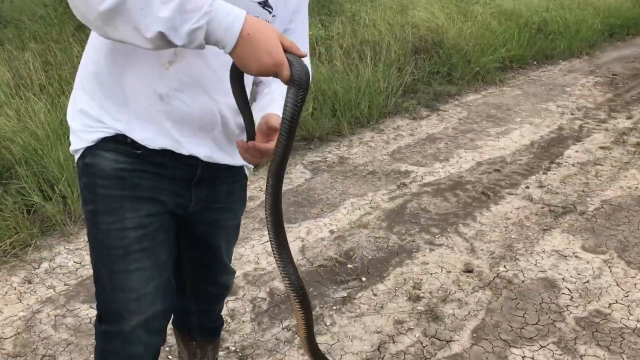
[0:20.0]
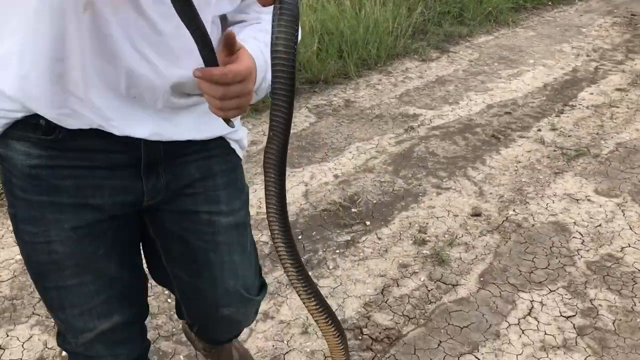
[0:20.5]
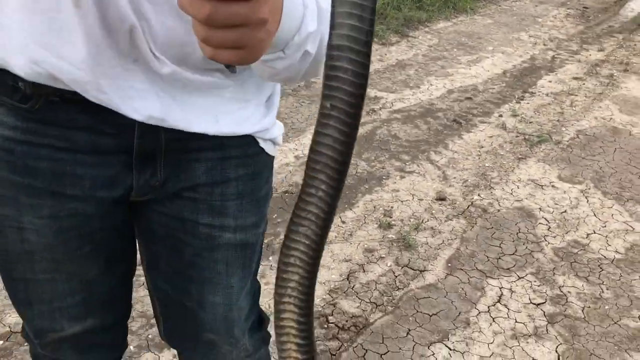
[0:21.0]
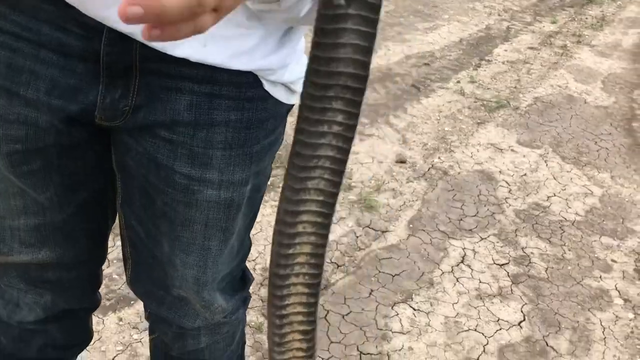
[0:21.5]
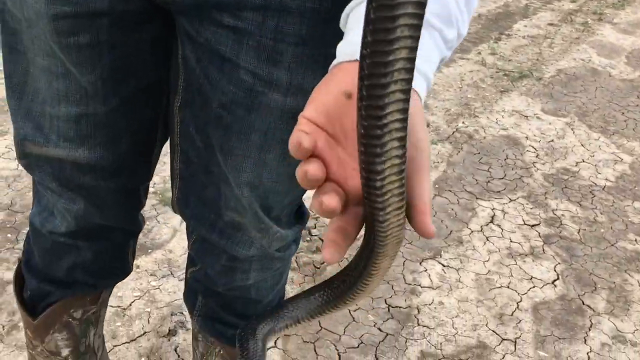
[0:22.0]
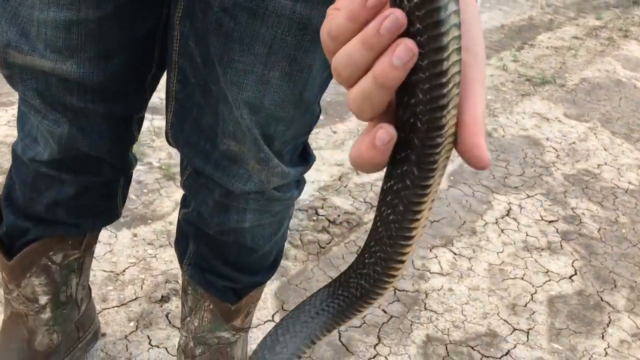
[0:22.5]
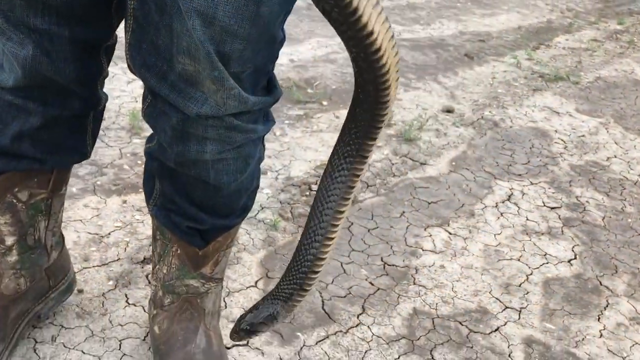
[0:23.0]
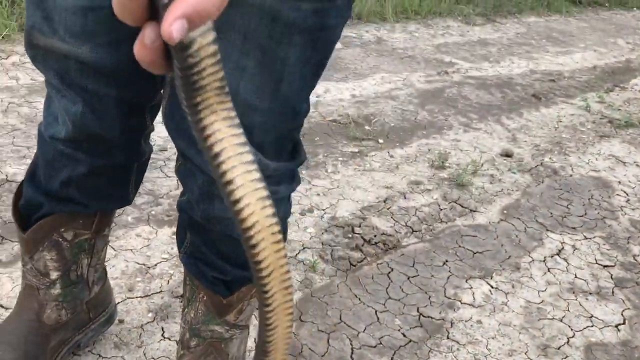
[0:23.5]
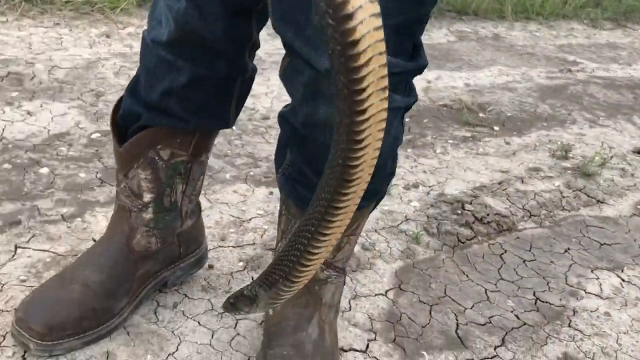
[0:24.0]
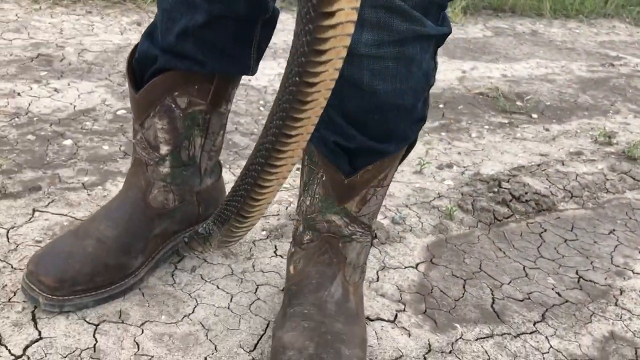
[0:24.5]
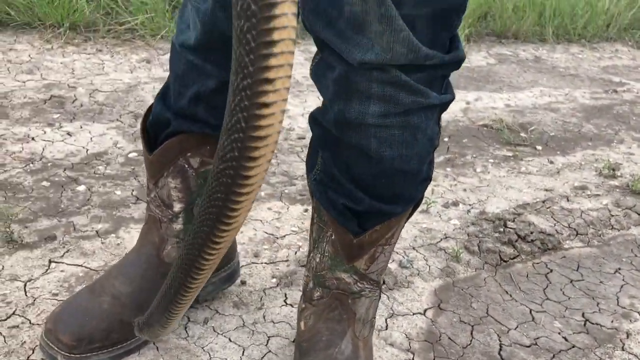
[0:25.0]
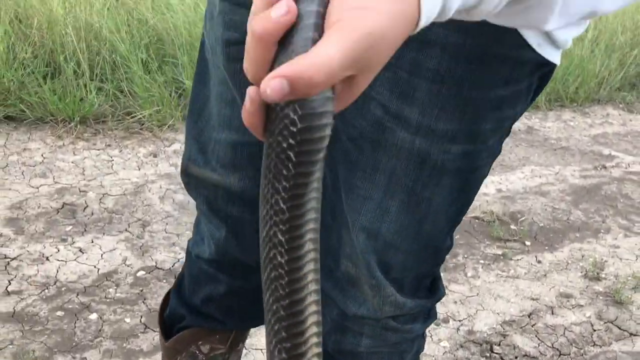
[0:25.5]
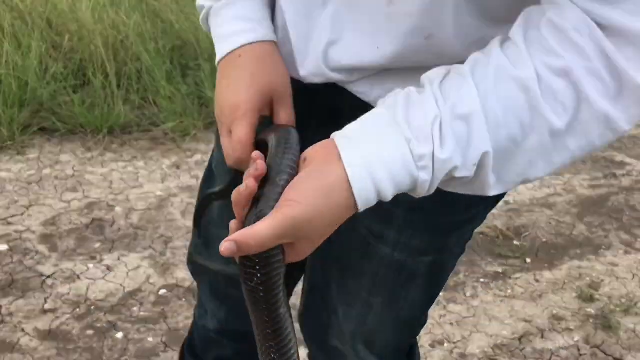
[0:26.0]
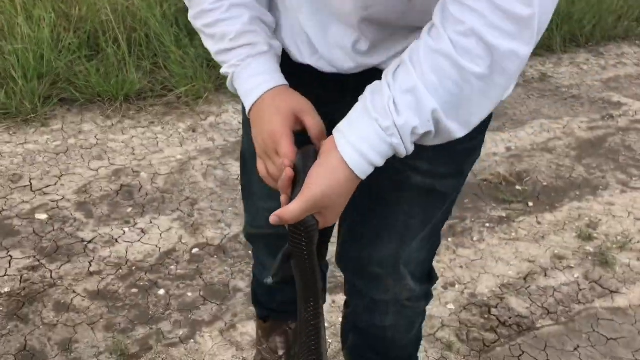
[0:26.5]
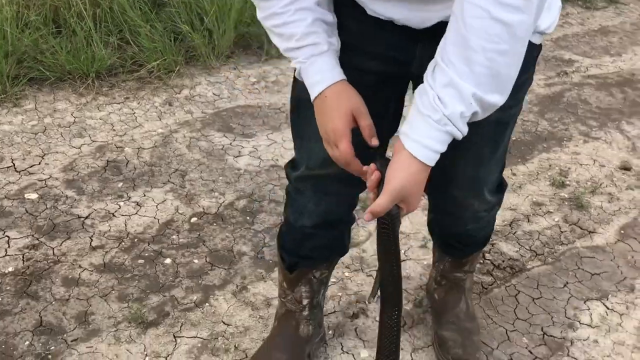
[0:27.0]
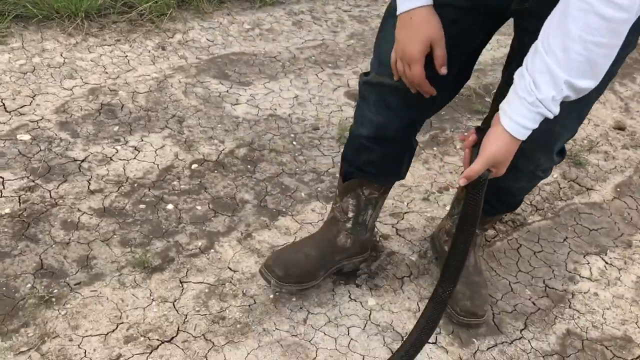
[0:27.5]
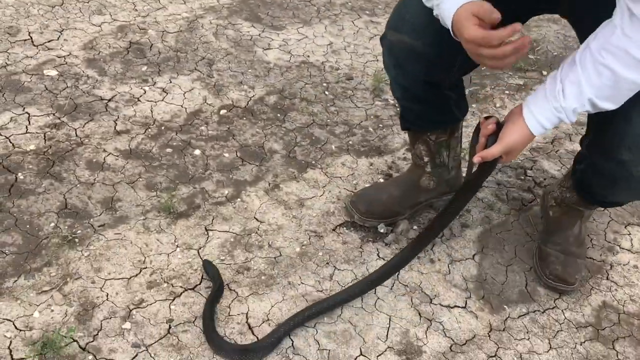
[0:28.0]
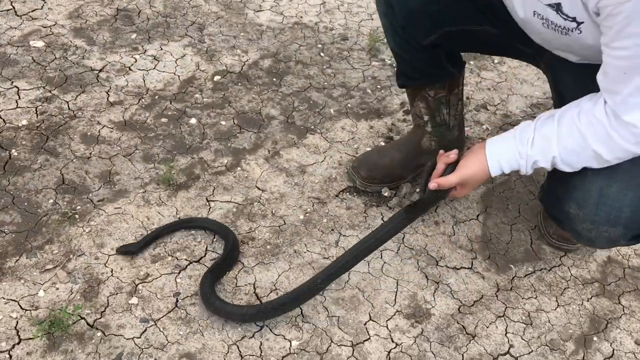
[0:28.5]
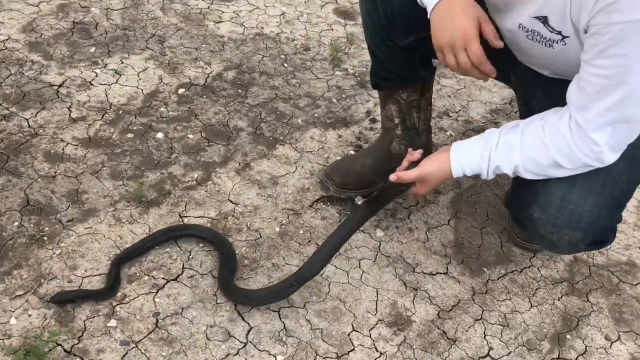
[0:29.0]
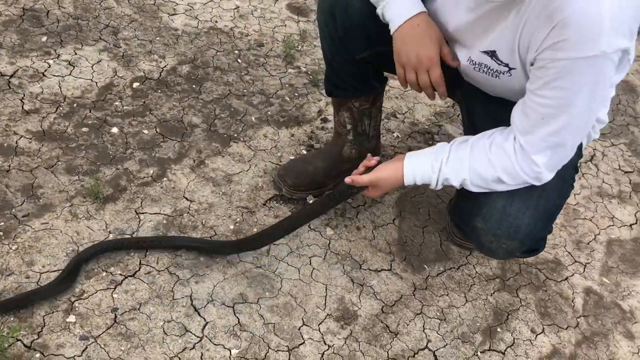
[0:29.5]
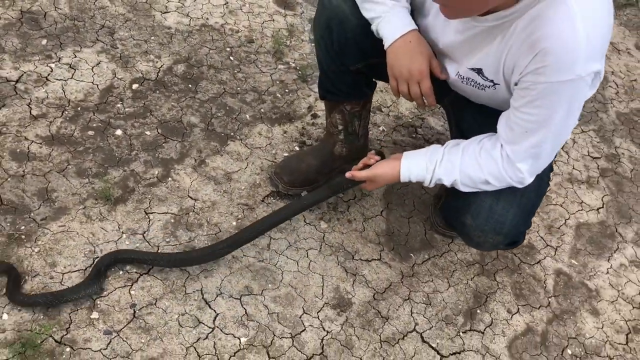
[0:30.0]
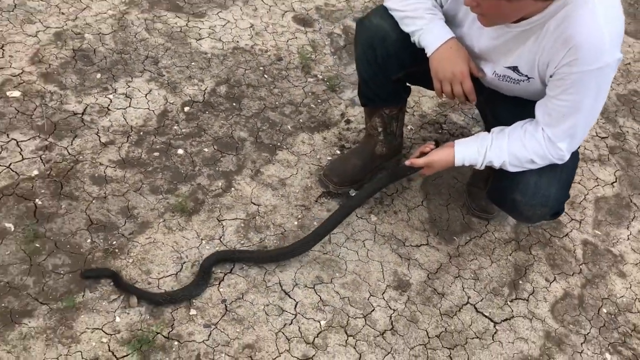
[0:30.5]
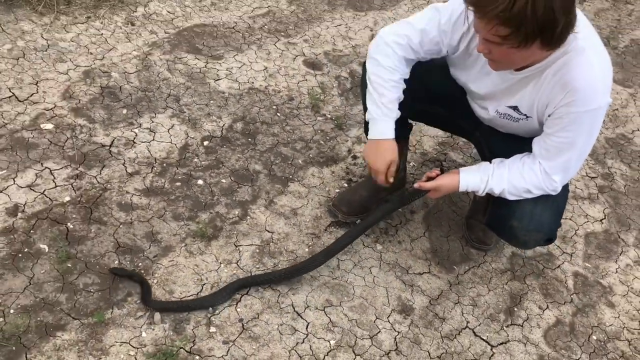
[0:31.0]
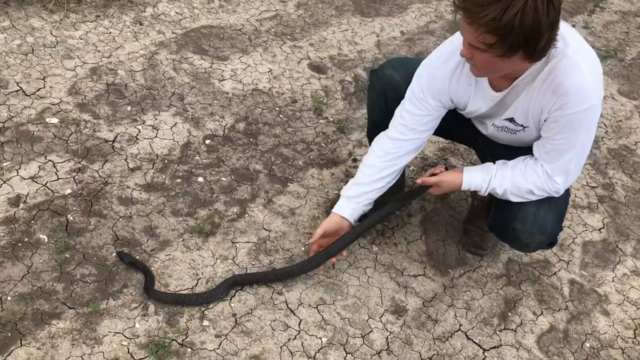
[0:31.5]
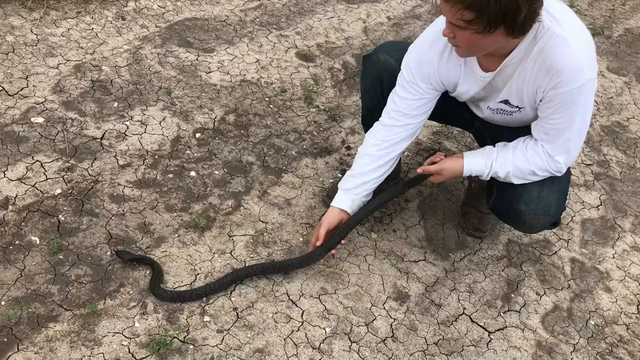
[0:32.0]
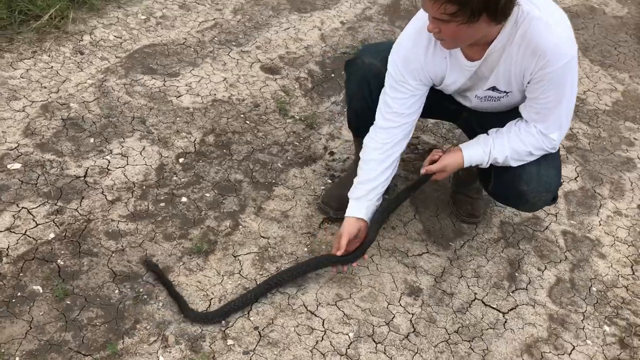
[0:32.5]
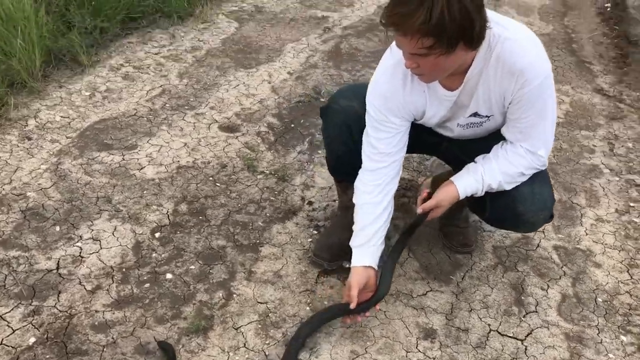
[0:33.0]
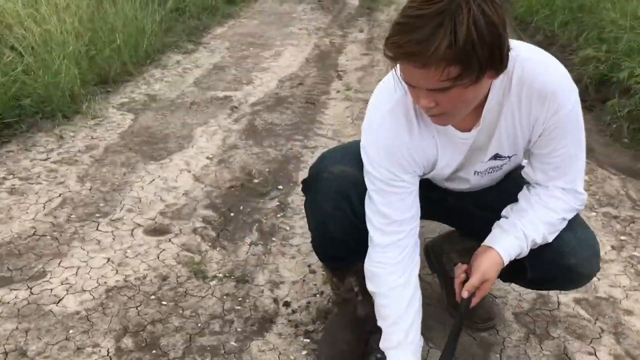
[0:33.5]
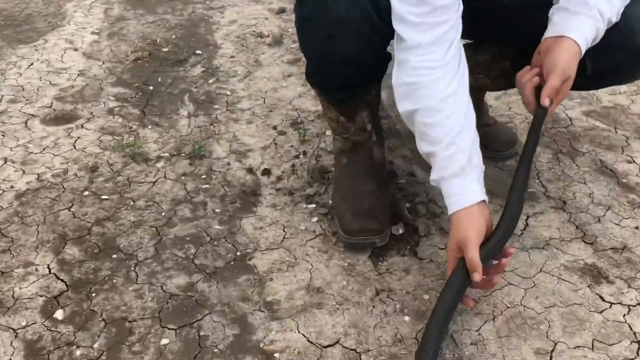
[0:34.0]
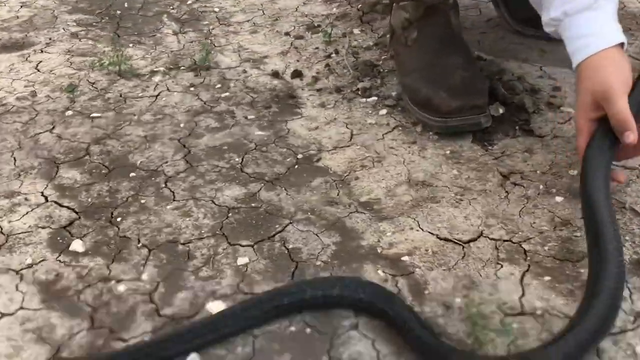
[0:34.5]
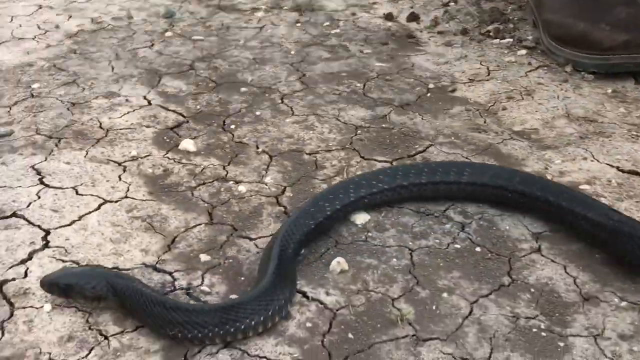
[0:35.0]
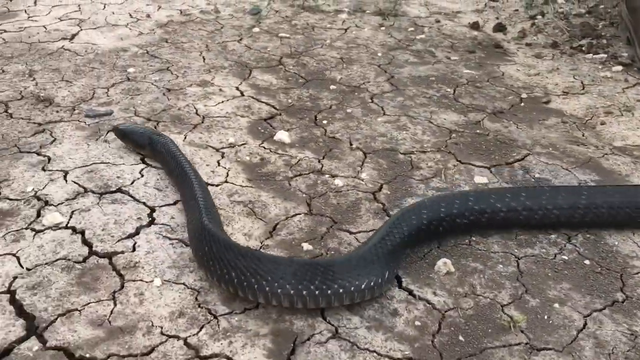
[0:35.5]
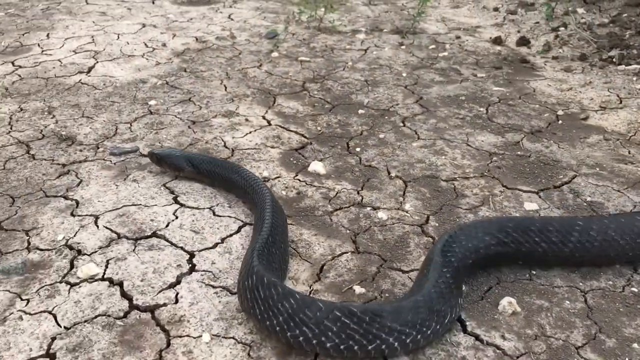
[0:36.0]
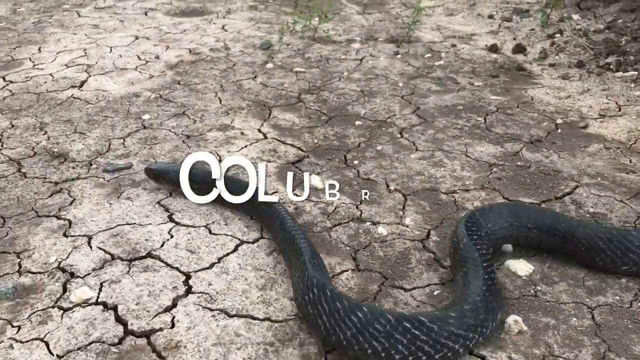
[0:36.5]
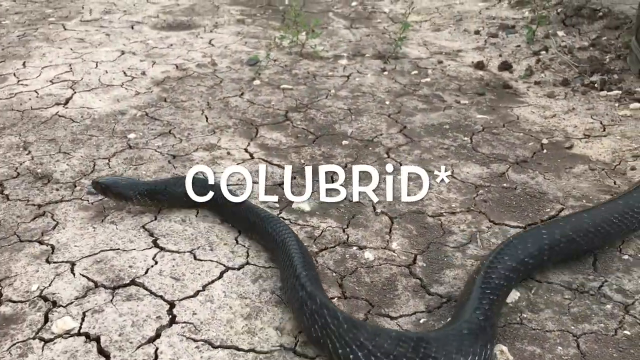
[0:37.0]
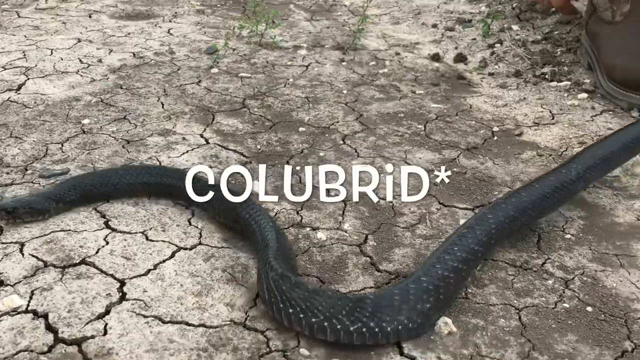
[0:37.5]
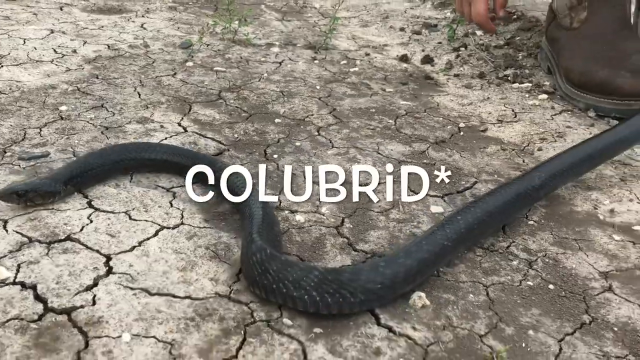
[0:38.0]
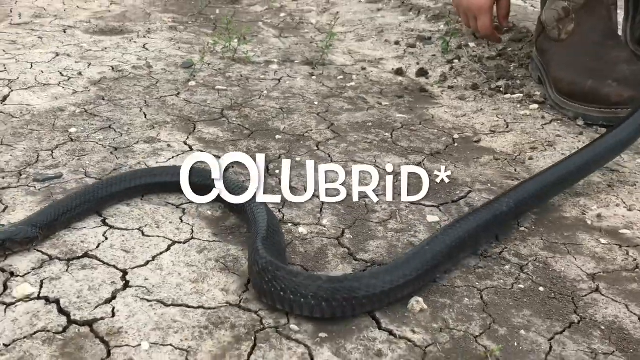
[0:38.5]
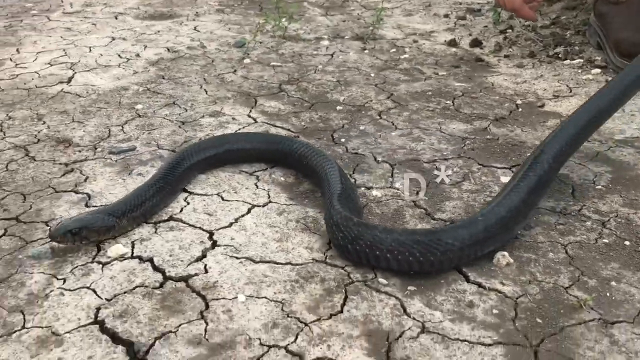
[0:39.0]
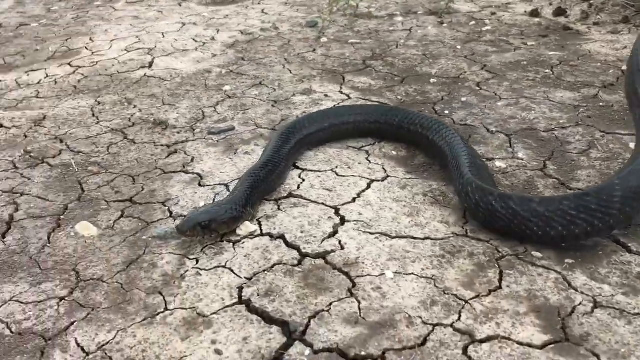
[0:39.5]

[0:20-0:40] The kid on the dirt road wears blue jeans tucked into boots that are a cross between cowboy boots and work boots, along with a long-sleeve white shirt. He handles the black snake closer to its tail, letting it slither on the ground while maintaining control of it. The snake slithers over dry, cracked ground where mud has dried out and formed cracks, and the word "colubrid" appears identifying the snake. The snake is trying to get away from the kid. It is black with a white underside, and he shows how it moves. The ground behind him is arid, and some of the grass has already died; the rest is tall green grass around him on the dried, cracked dirt road.